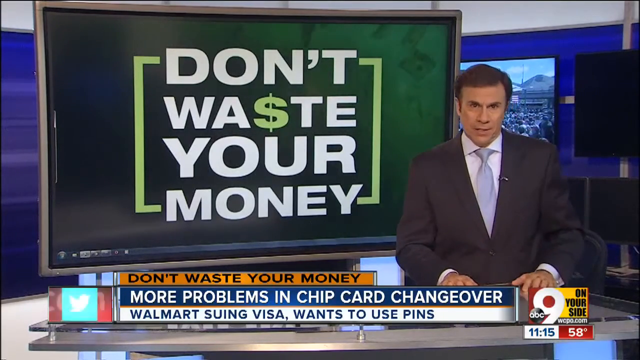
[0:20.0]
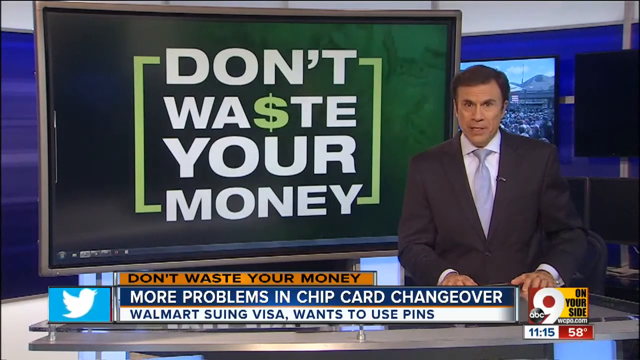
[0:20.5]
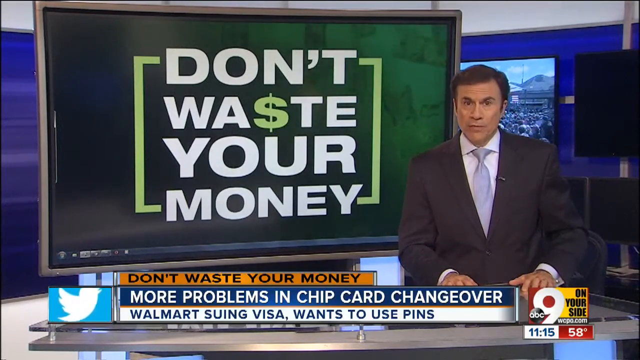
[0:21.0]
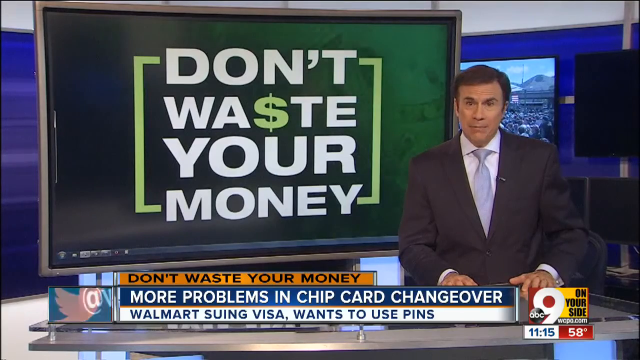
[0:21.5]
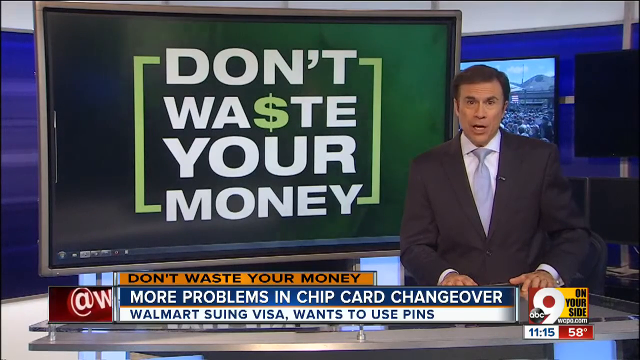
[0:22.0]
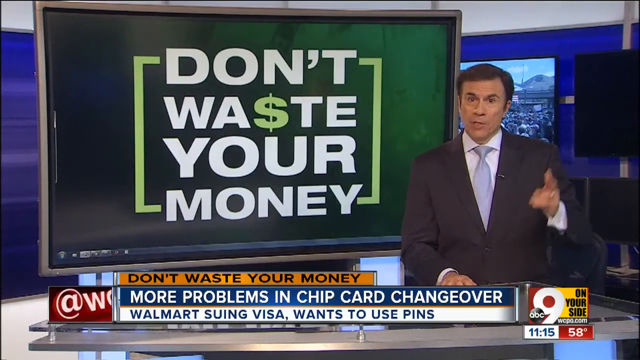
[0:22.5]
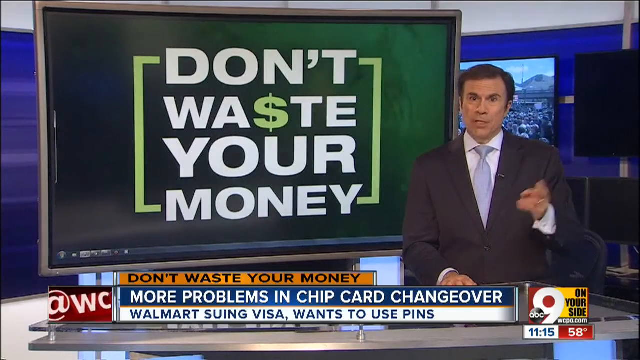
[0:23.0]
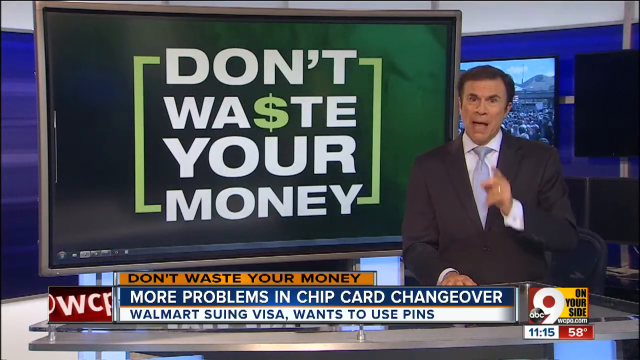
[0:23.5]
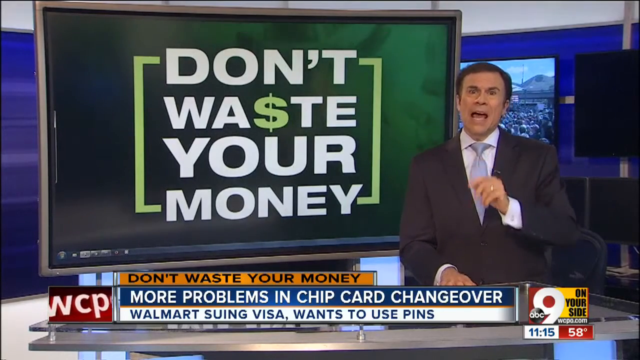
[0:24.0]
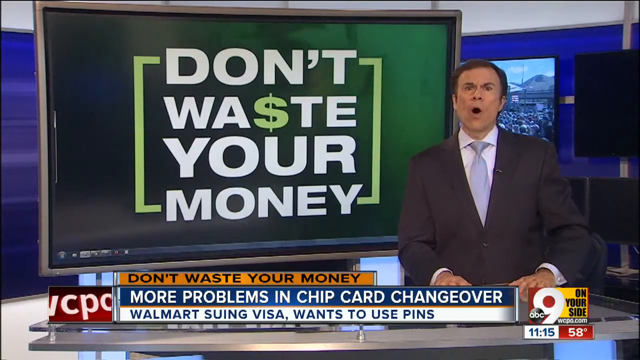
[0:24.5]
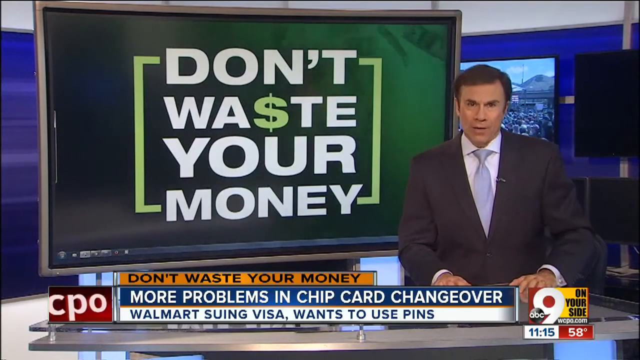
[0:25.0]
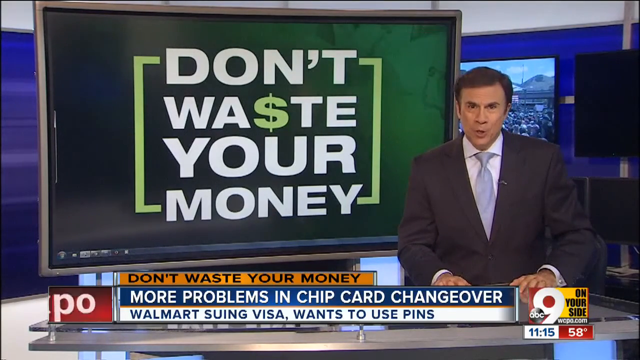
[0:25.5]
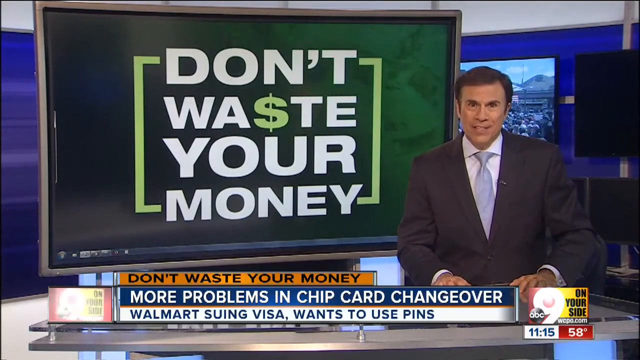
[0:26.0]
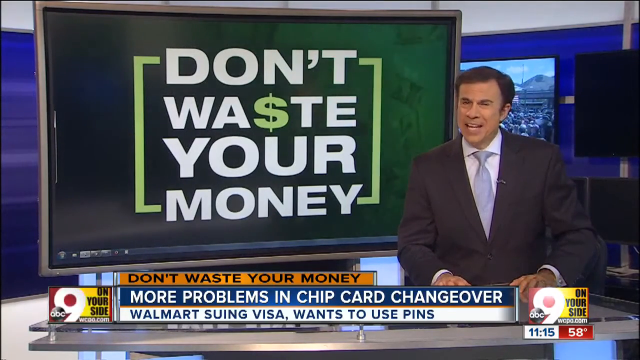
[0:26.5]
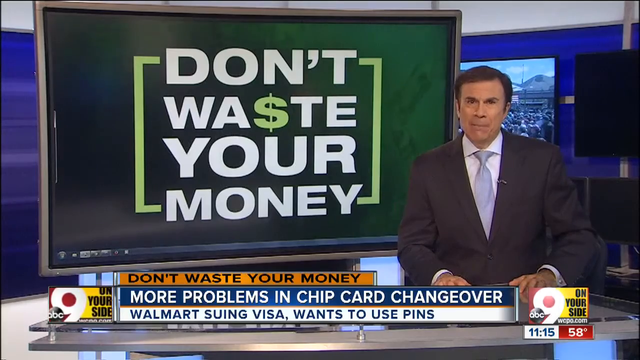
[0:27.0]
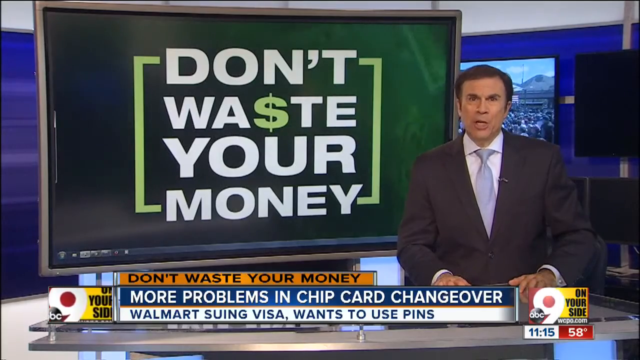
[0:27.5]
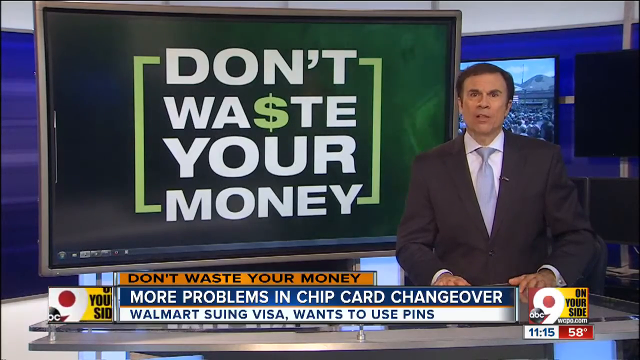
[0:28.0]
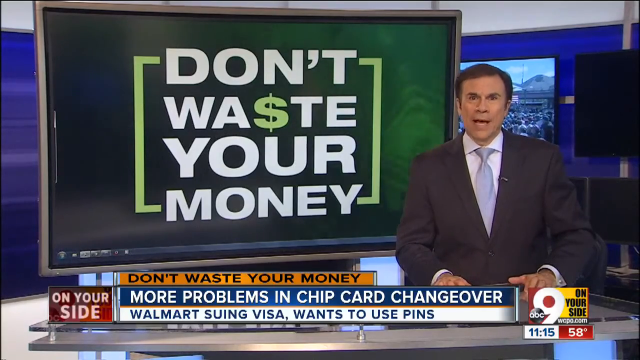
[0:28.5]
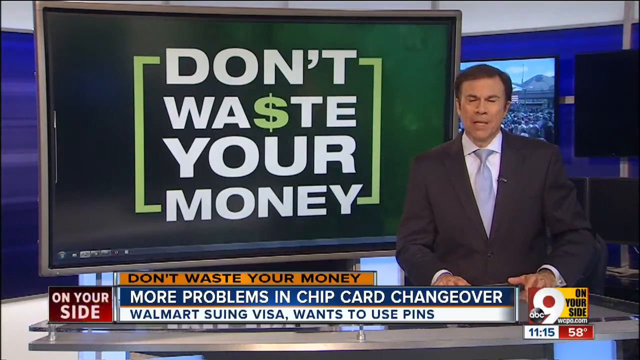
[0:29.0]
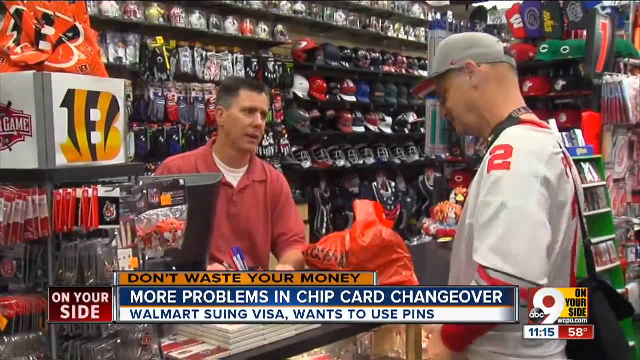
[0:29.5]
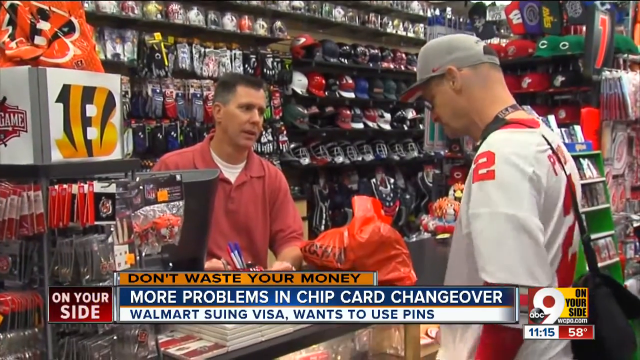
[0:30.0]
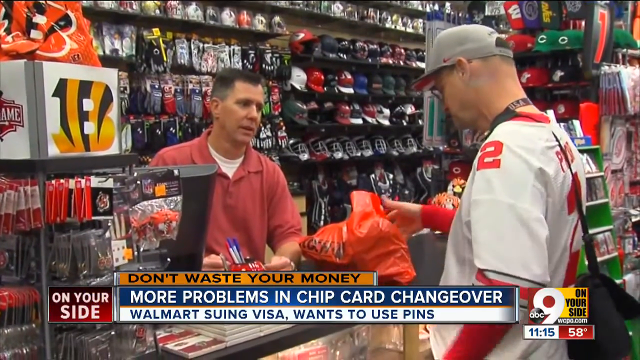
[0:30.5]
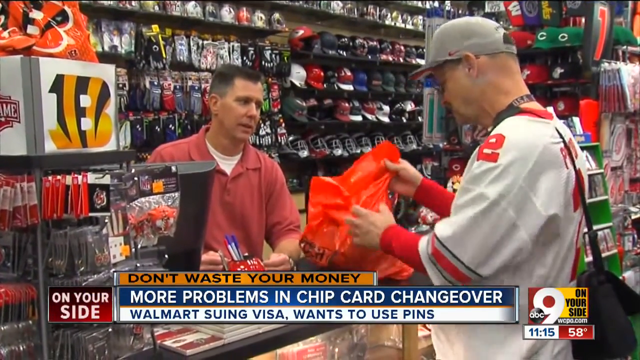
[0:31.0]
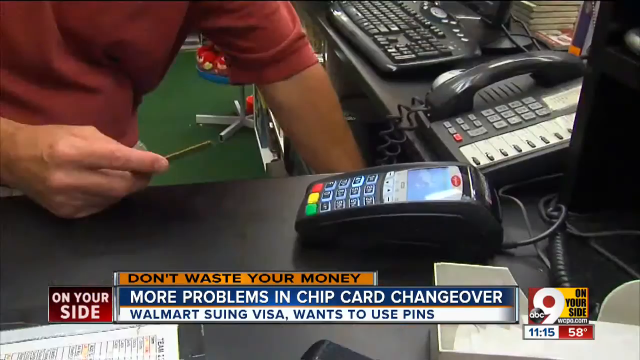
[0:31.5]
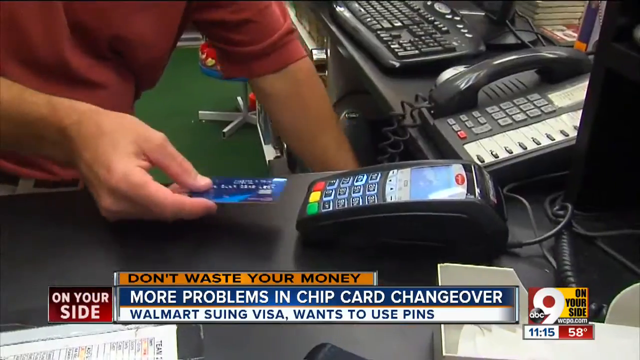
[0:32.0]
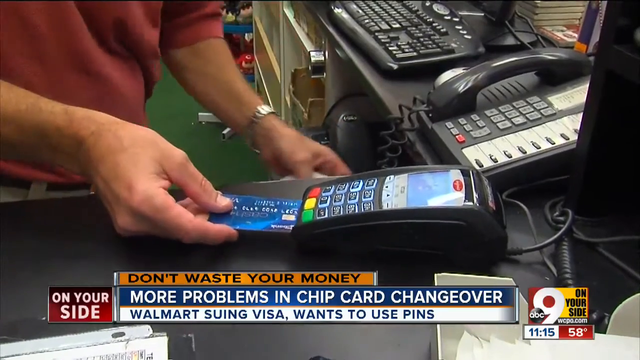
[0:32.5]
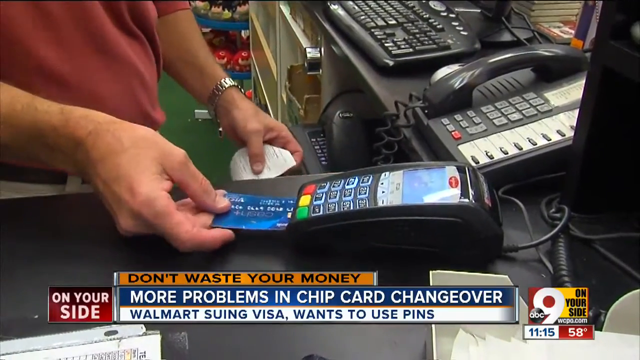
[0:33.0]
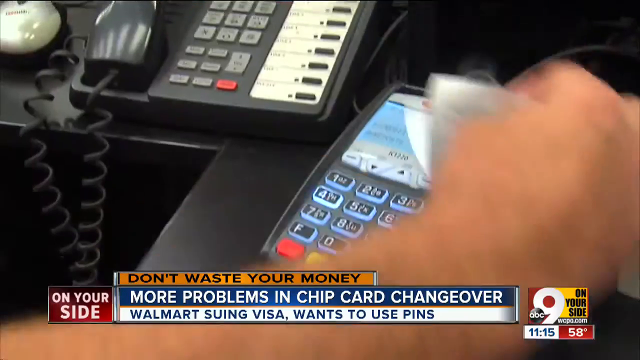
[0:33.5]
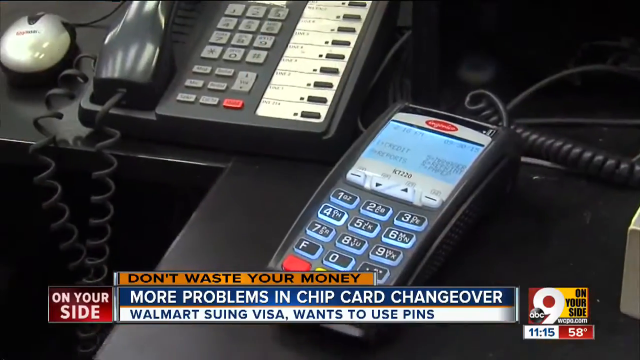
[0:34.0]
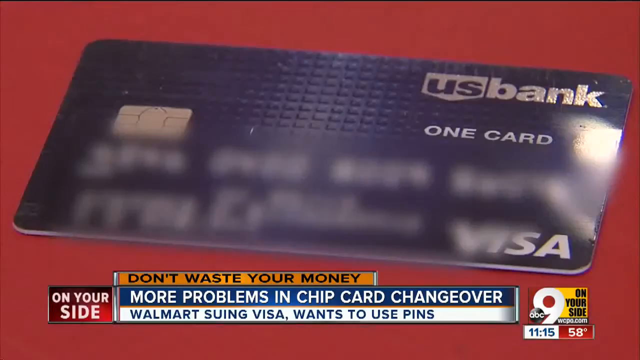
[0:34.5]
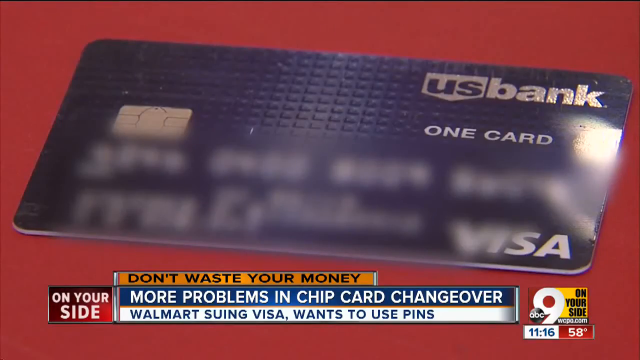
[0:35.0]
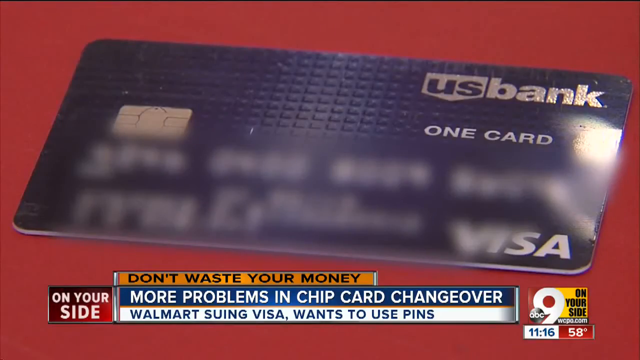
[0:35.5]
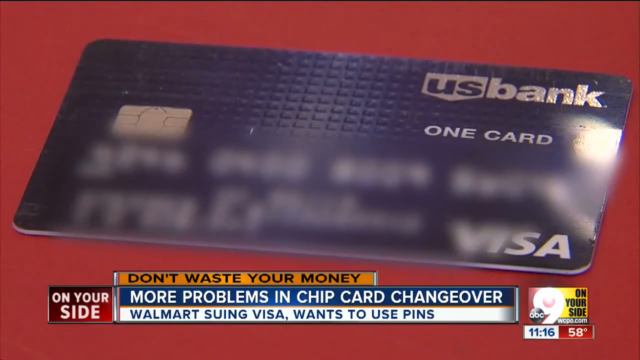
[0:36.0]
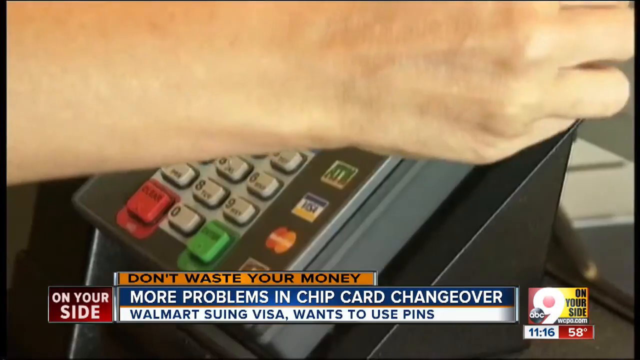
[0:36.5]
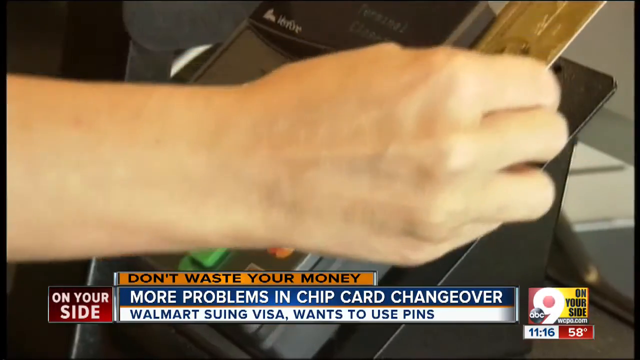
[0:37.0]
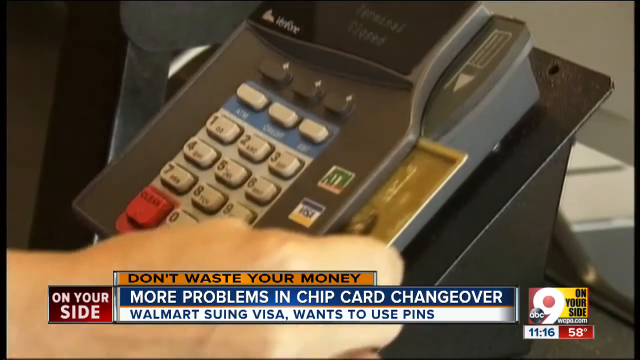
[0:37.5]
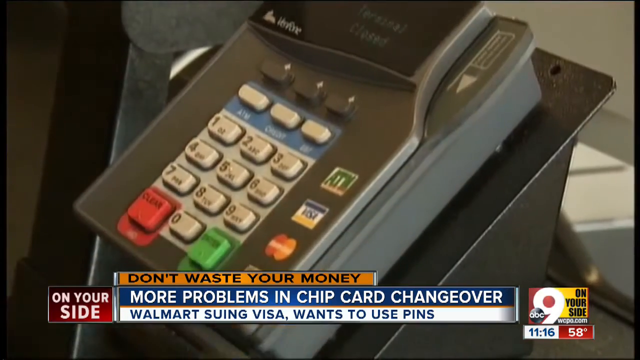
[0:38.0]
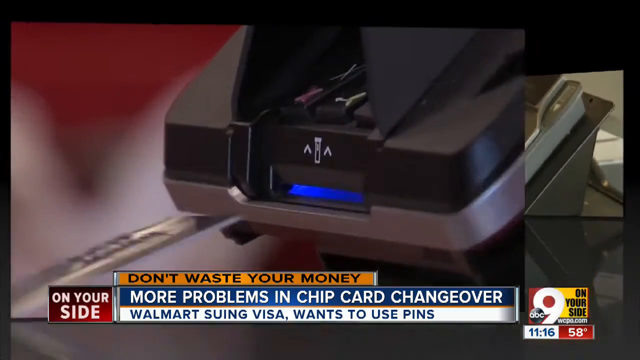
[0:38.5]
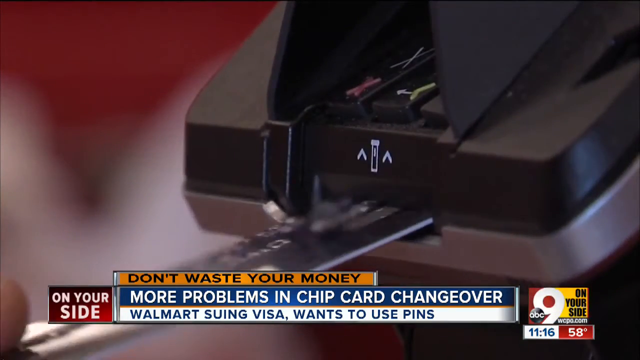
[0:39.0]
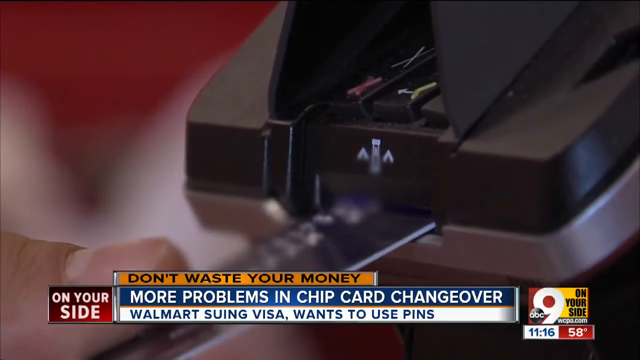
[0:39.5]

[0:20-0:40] The same screen in the background shows "don't waste your money" in white lettering. The newscaster is off to the right with both hands face down on a table, his left index finger pointing outward from his hand. At the bottom, text reads "don't waste your money more problems in the chip card changeover." He gestures with his hand in a counter-clockwise movement, four fingers straight and the index finger pointed toward the camera, then raises his hand with the index finger pointing up and shakes it toward the camera, his head bent slightly back. He nods, then moves his head from left to right, then nods up and down again. The scene switches to a business that looks like a sports shop of some kind. A man in a jersey and a baseball cap type hat talks to the worker behind the counter, who has his hands face down on the counter. The customer's head is slightly tilted downward as he picks up an orange bag with his purchase. The scene switches to the worker, who holds a blue debit or credit card in his right hand and slides it into a card machine while his left hand holds a receipt. A close-up shows a purple U.S. Bank 1 card with its writing blurred out, laying on a red-maroon surface. Next, a person's right hand swipes a card downward through the machine. Another scene shows a card being inserted into the bottom of another machine.